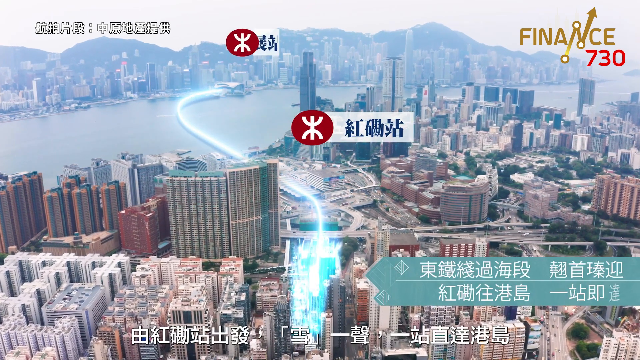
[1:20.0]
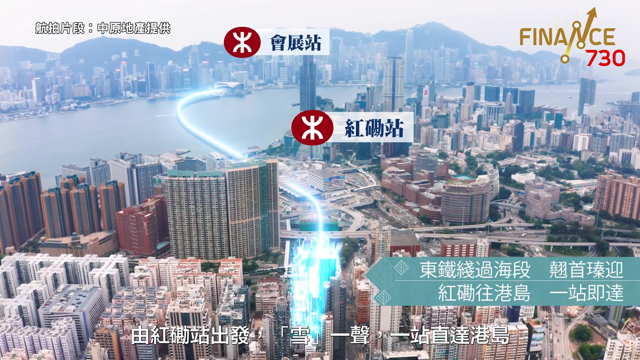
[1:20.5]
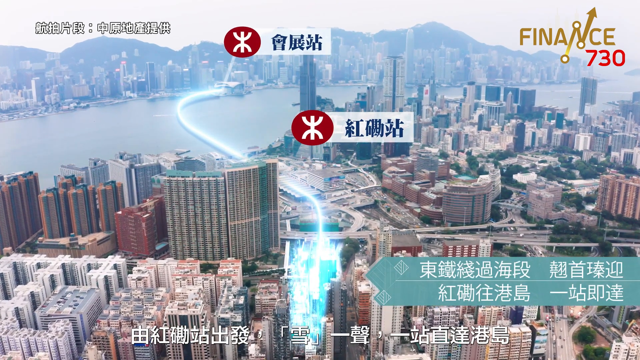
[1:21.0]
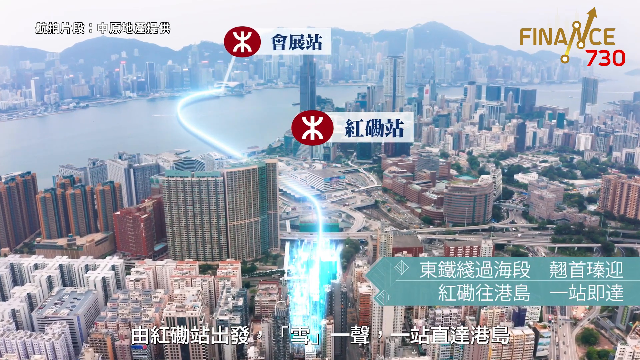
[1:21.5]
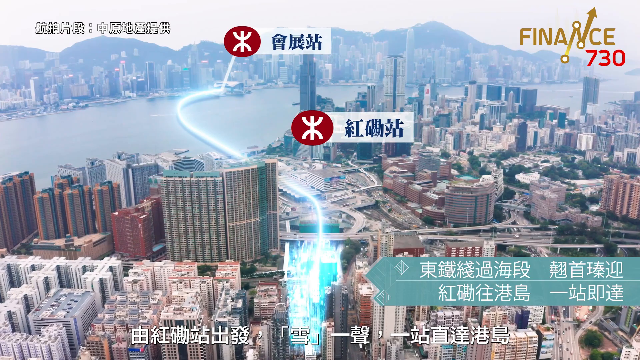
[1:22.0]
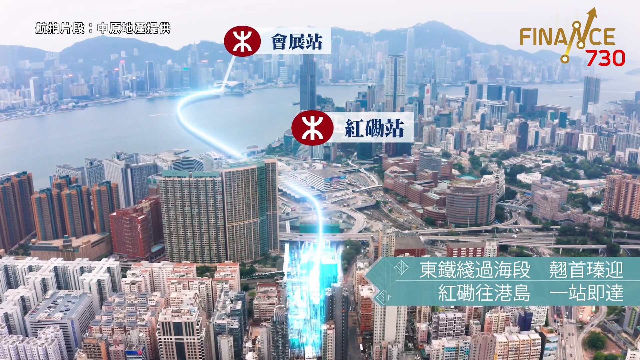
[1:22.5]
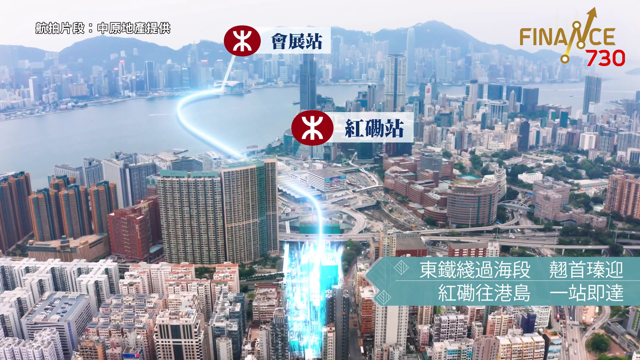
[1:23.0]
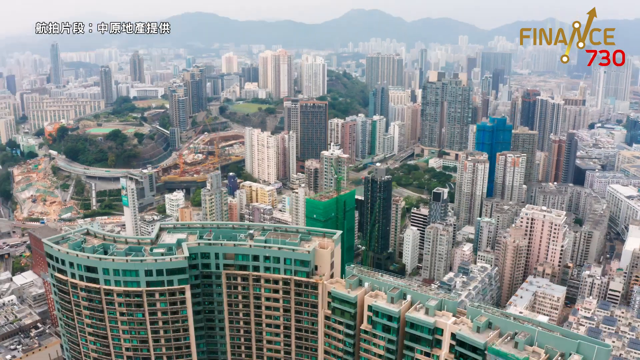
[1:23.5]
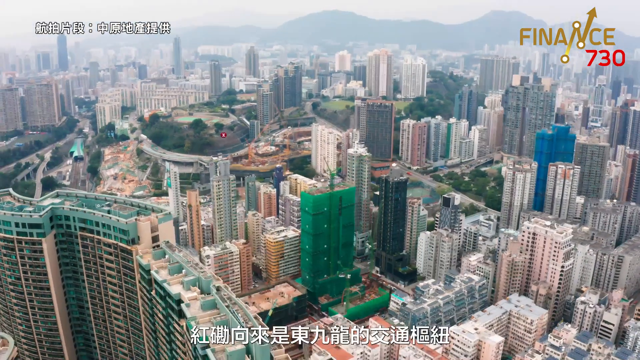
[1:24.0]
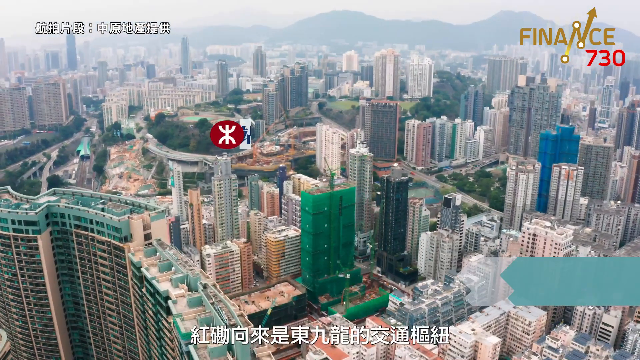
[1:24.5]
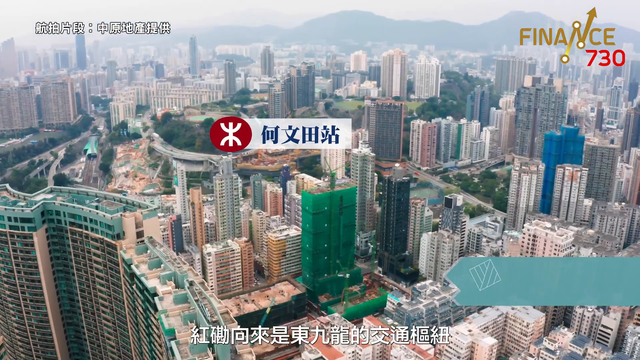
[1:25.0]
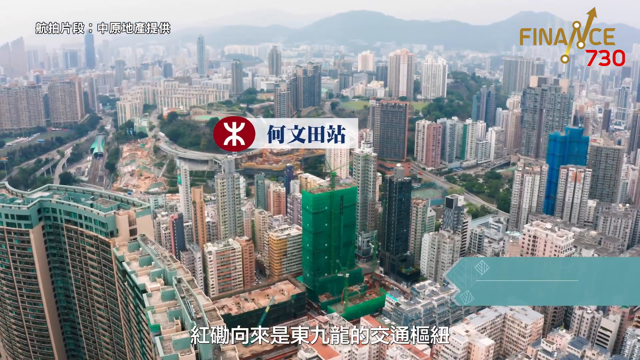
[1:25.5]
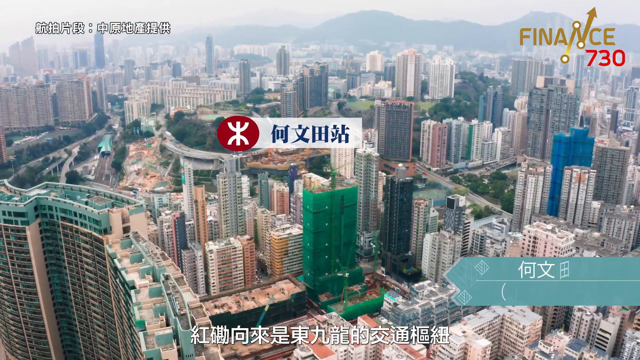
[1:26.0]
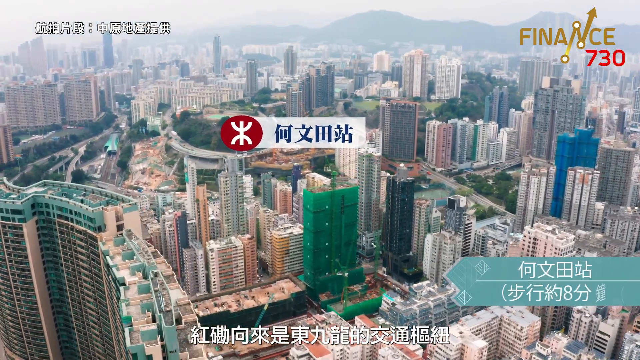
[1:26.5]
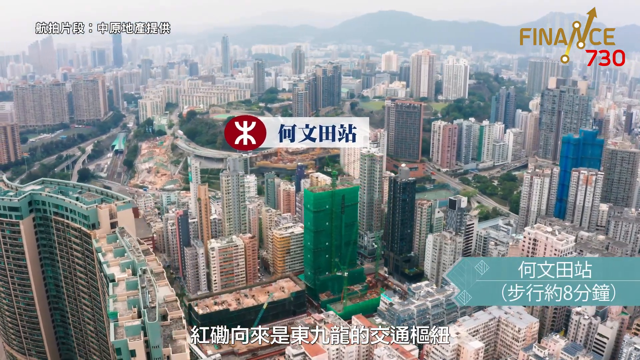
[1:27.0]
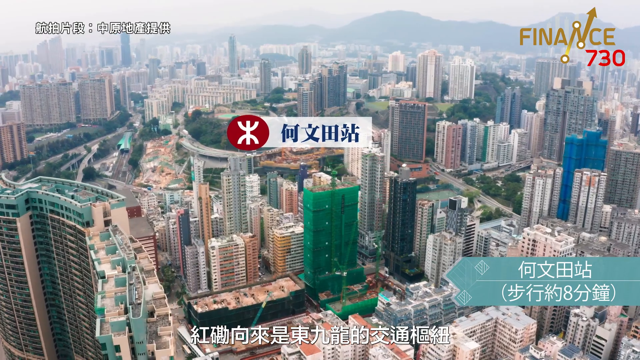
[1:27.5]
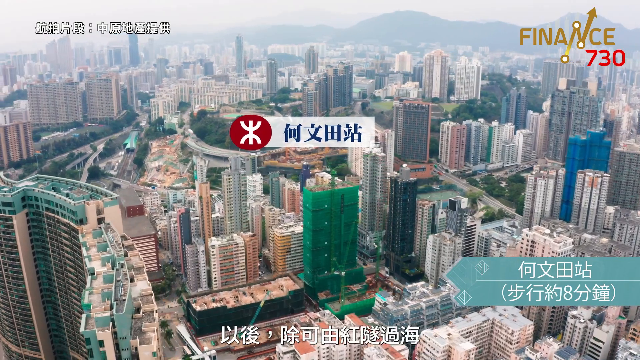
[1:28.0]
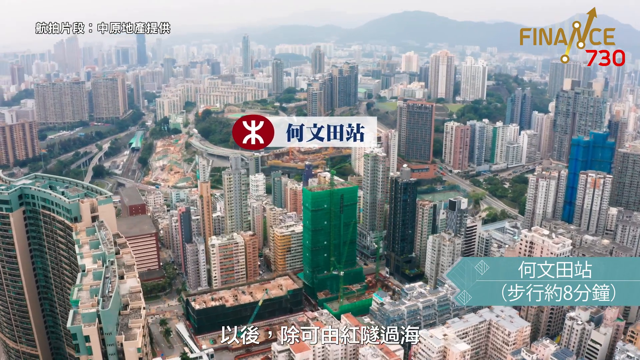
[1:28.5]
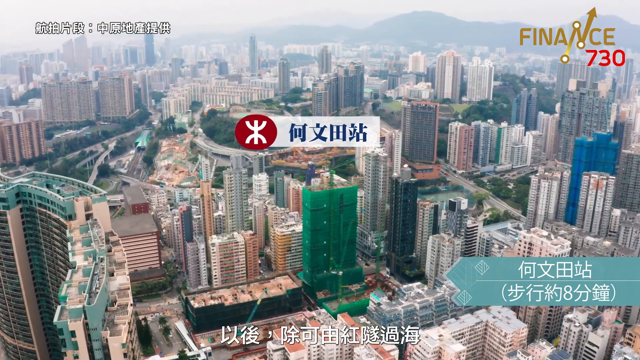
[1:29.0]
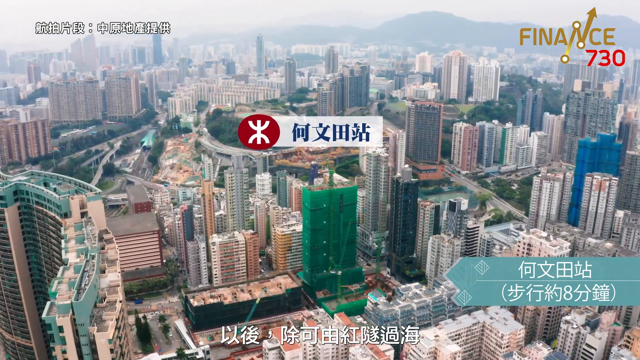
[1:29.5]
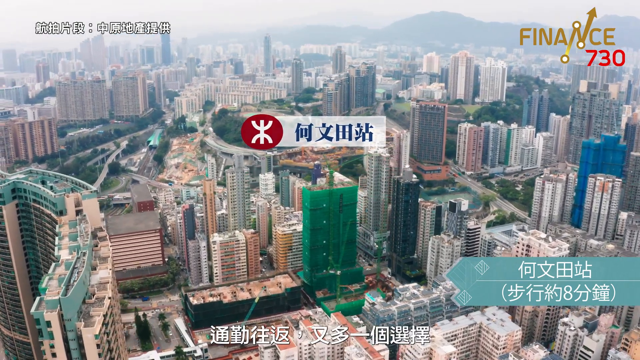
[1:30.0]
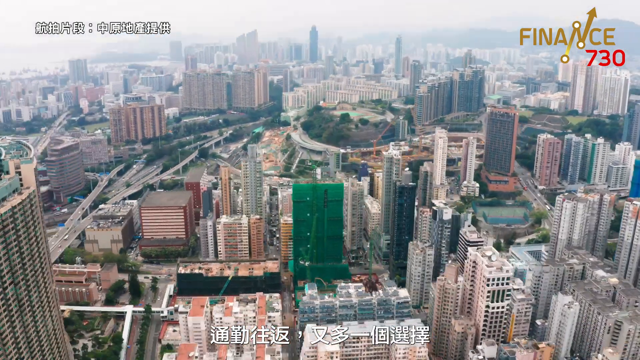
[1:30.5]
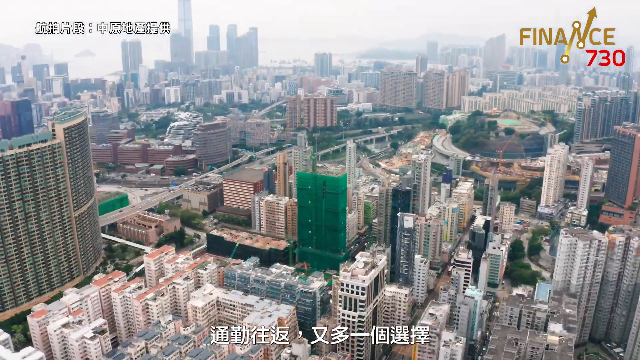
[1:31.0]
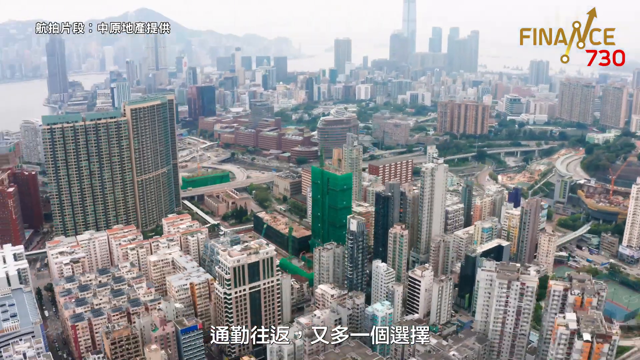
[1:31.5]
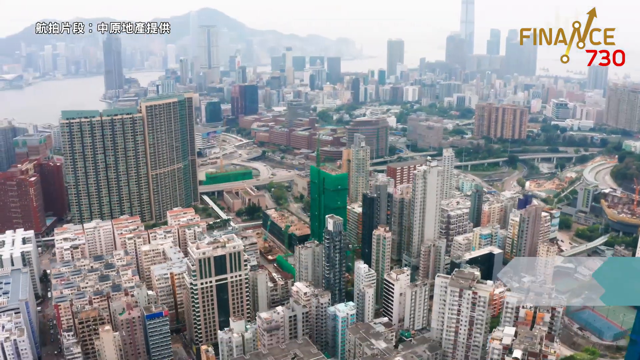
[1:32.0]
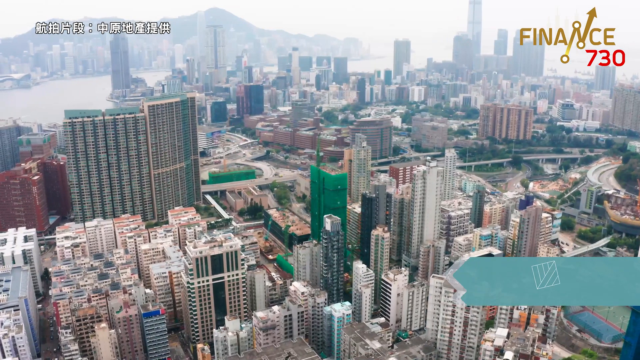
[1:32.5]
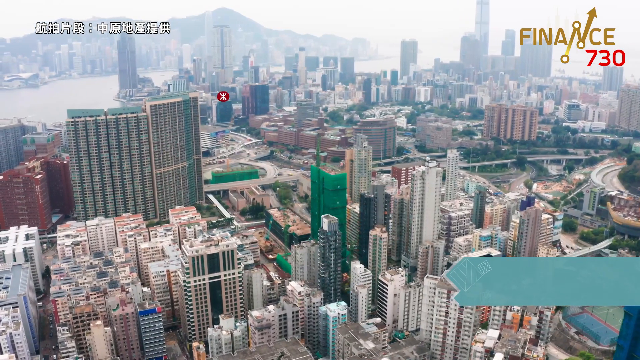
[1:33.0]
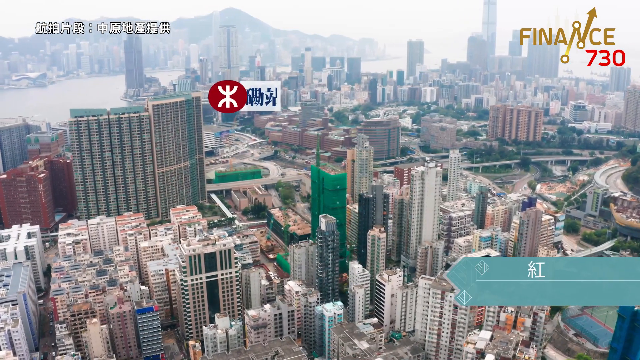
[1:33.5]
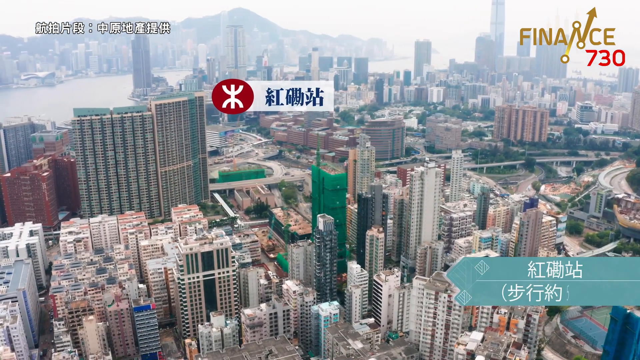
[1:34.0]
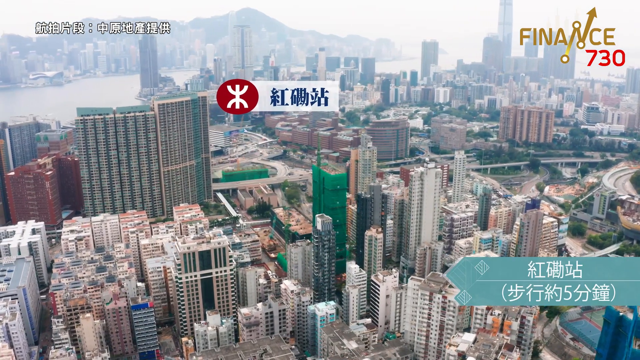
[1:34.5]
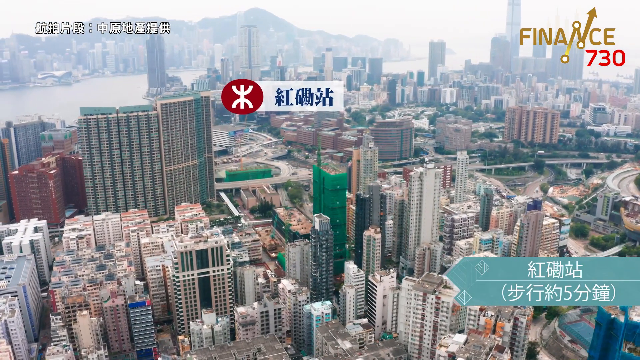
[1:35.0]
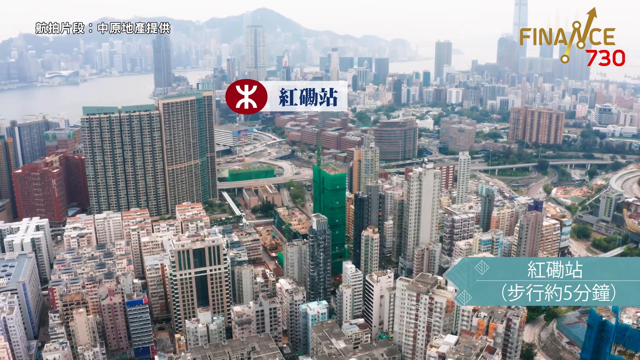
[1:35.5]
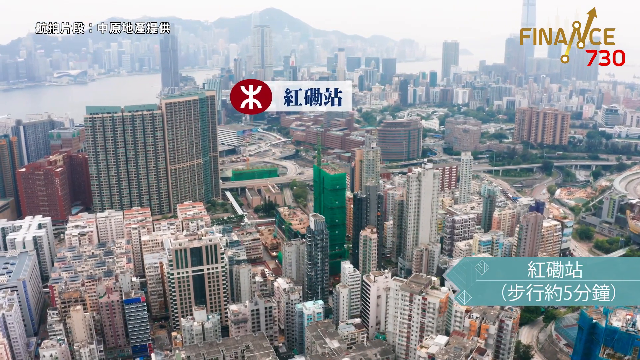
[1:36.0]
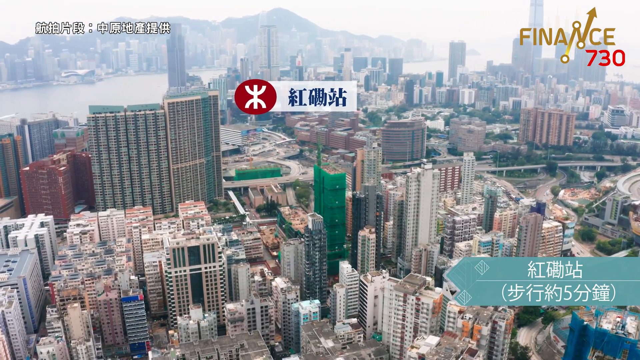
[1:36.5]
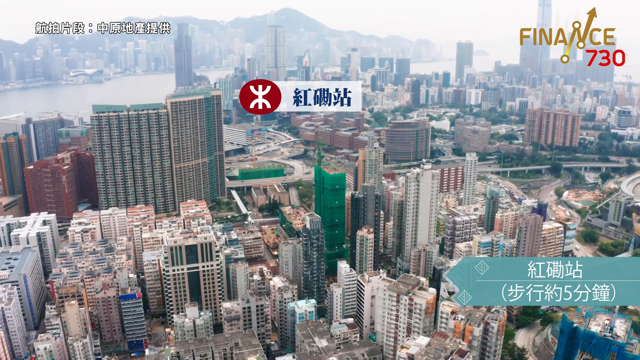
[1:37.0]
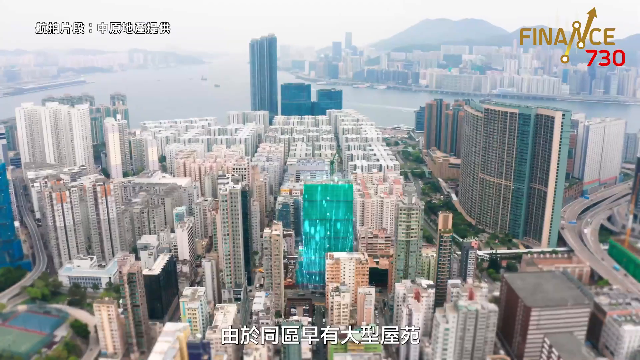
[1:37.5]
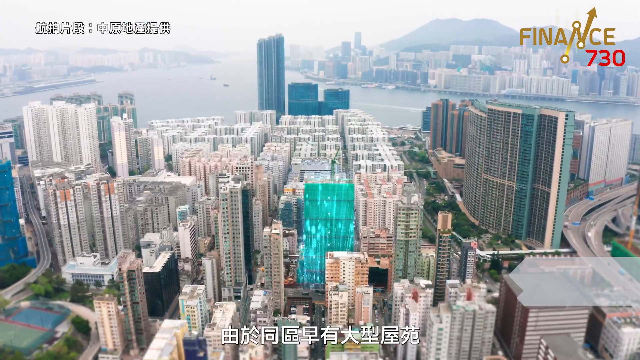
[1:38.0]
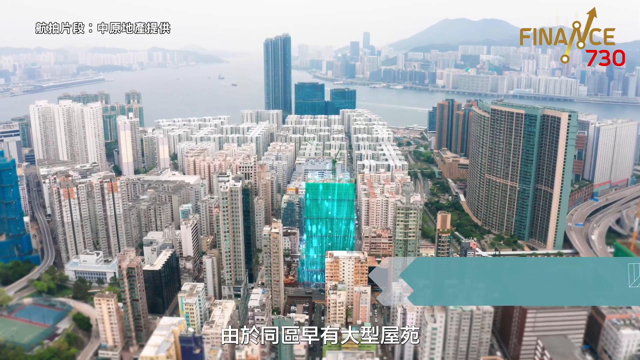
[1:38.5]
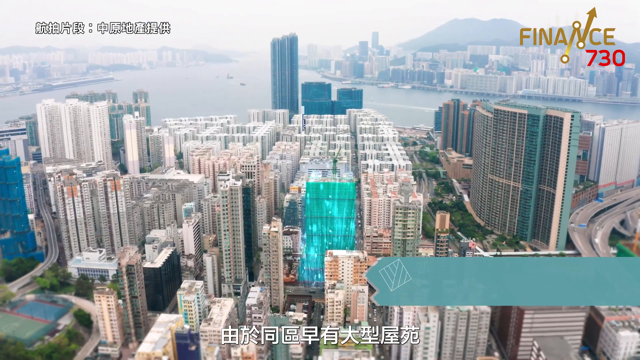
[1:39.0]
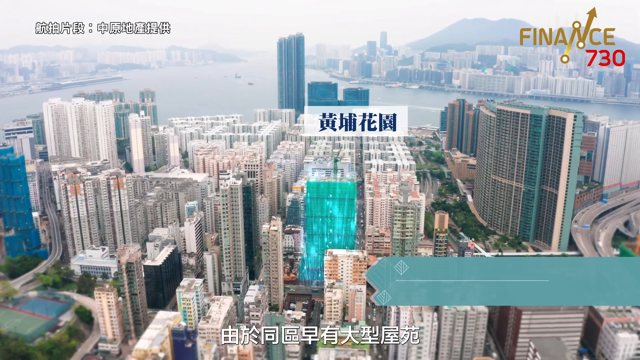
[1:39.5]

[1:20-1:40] An area with a lot of high-rise buildings is shown, possibly Hong Kong. Two buildings are highlighted, one on either side of the water, with little words above them that cannot be read. An overhead camera, like a drone shot, goes around showing the height of the building and its location relative to other buildings. The two buildings are highlighted from opposite sides of the water, and almost an arc of light runs between them, going across the water rather than over the sky. The two look to be not terribly far apart.